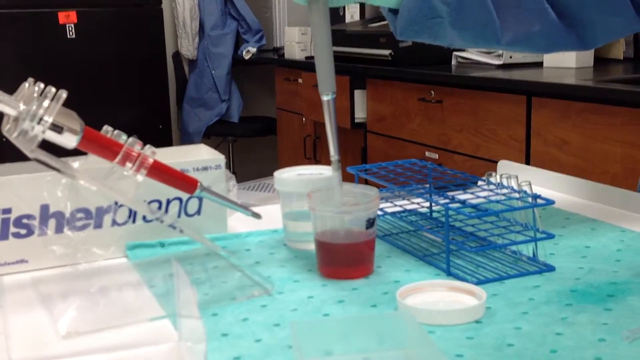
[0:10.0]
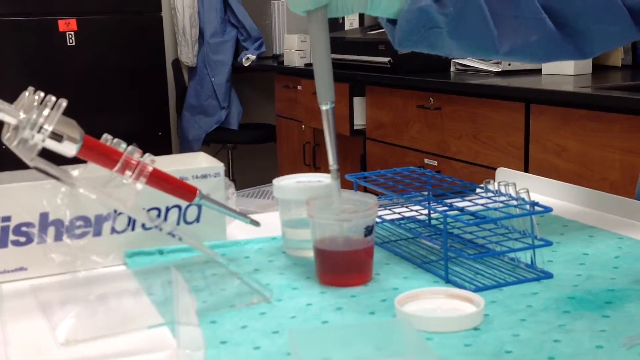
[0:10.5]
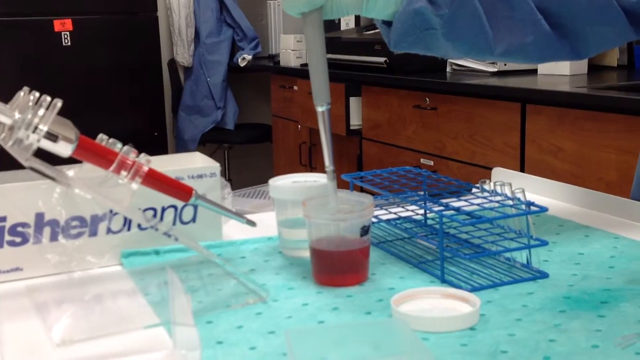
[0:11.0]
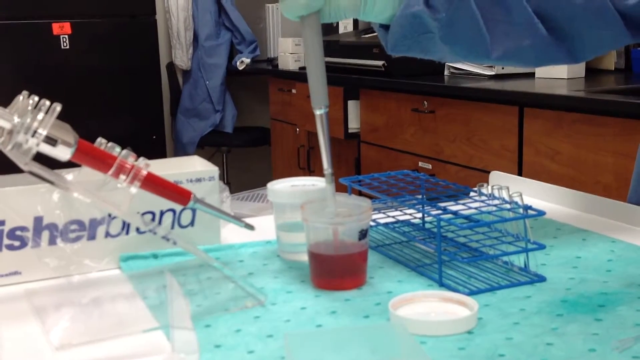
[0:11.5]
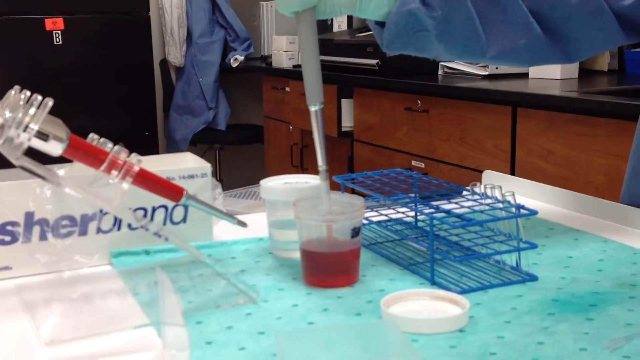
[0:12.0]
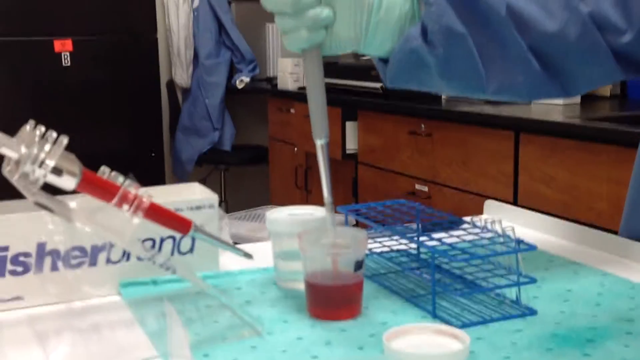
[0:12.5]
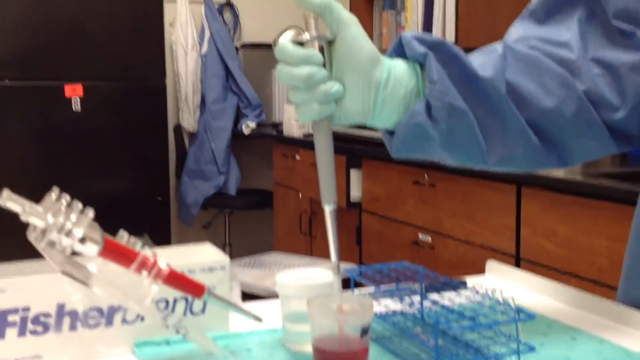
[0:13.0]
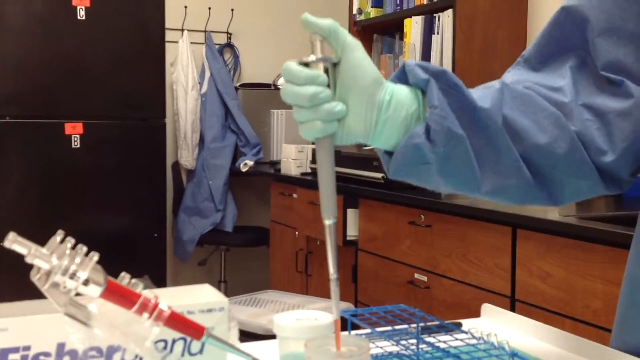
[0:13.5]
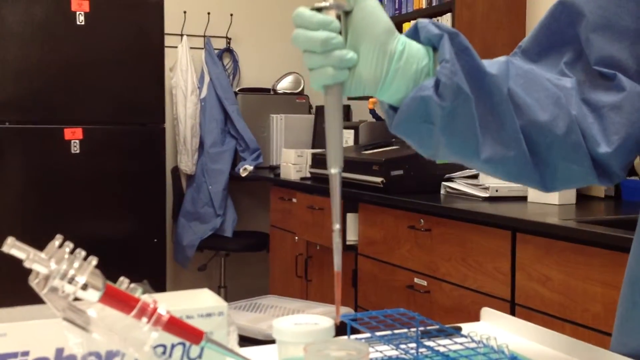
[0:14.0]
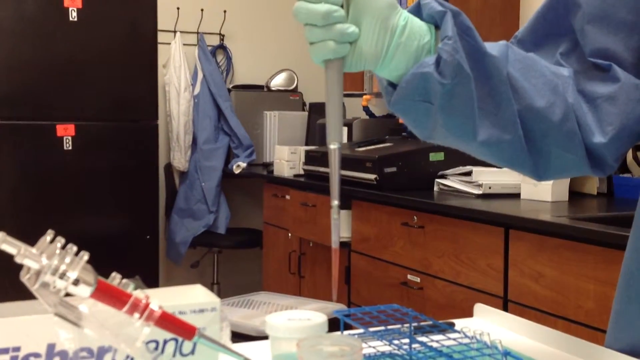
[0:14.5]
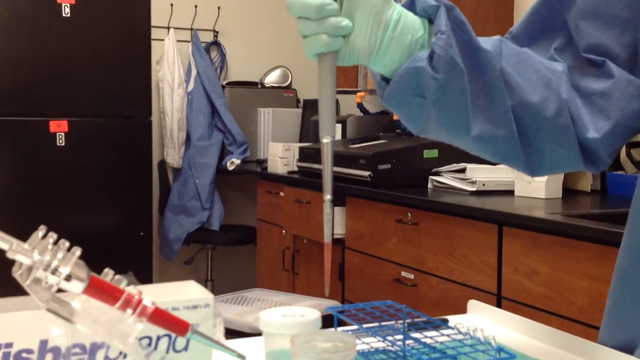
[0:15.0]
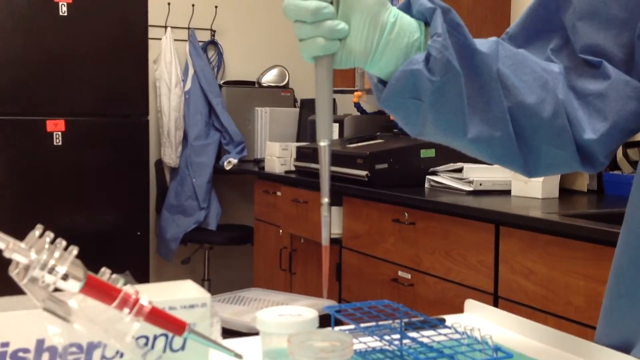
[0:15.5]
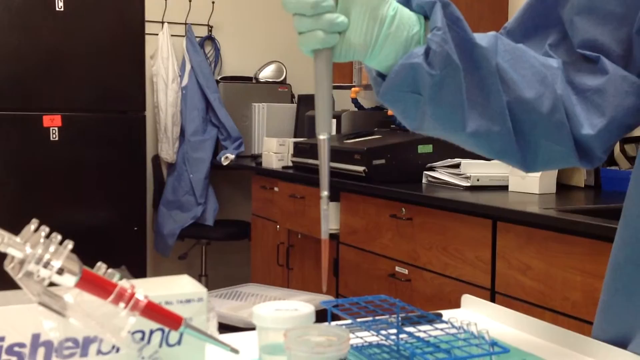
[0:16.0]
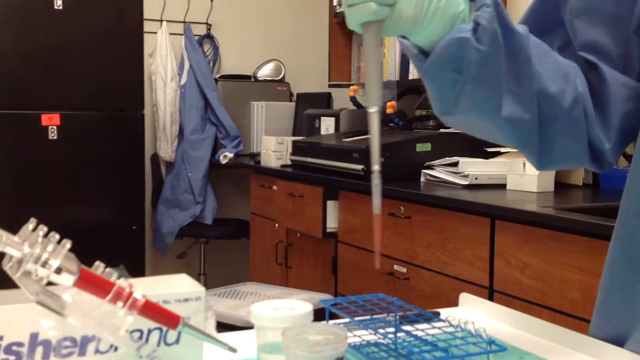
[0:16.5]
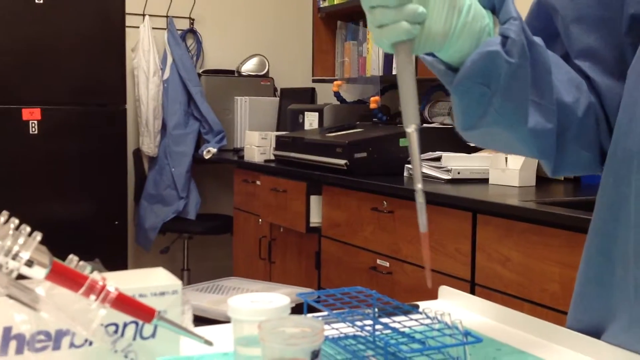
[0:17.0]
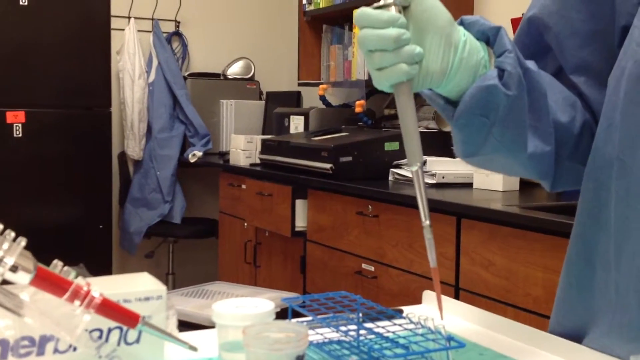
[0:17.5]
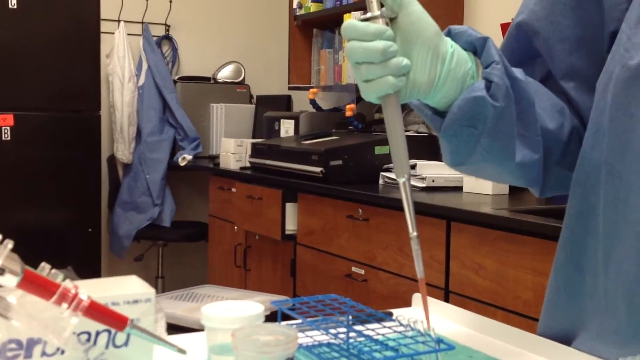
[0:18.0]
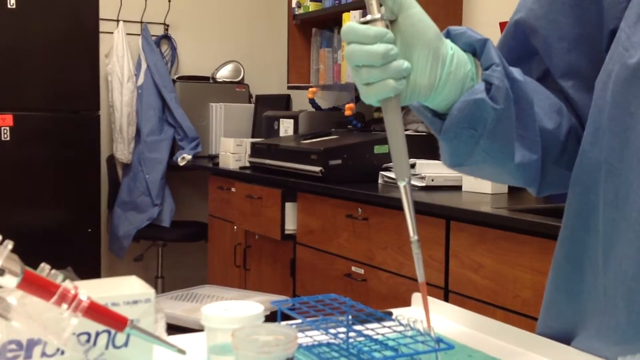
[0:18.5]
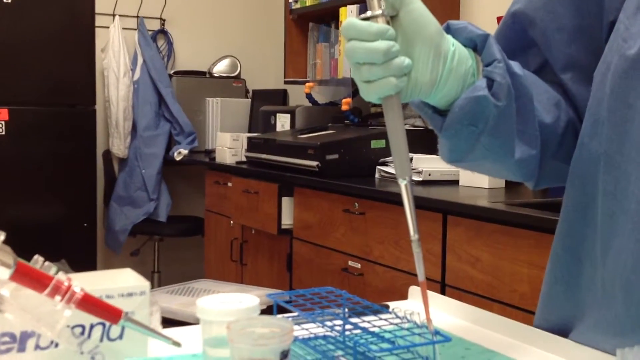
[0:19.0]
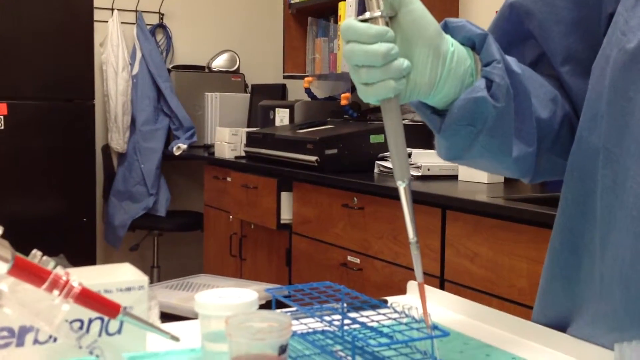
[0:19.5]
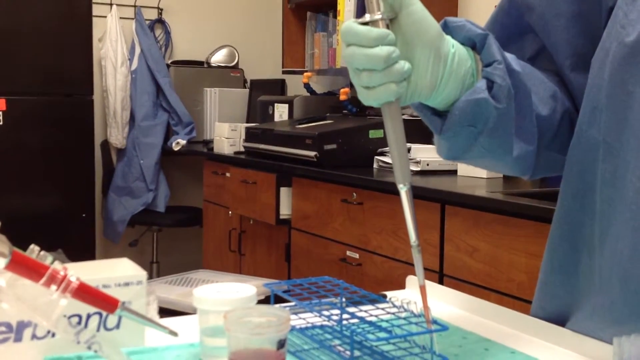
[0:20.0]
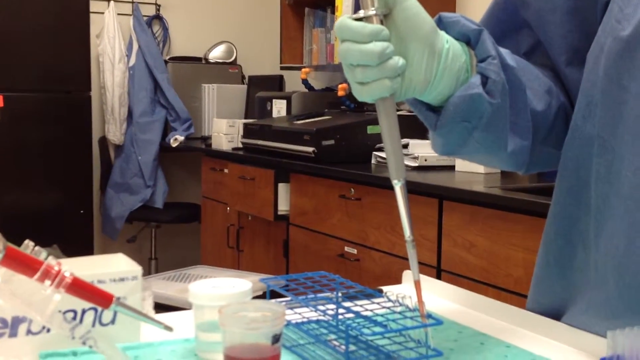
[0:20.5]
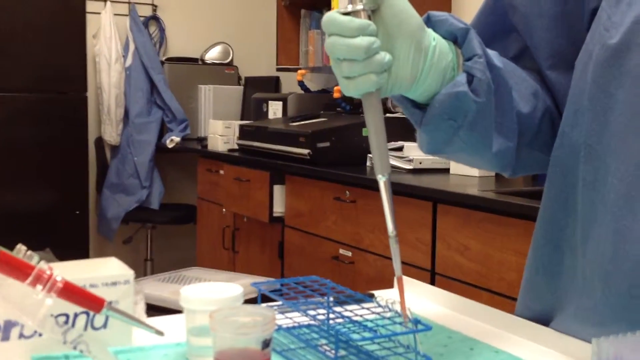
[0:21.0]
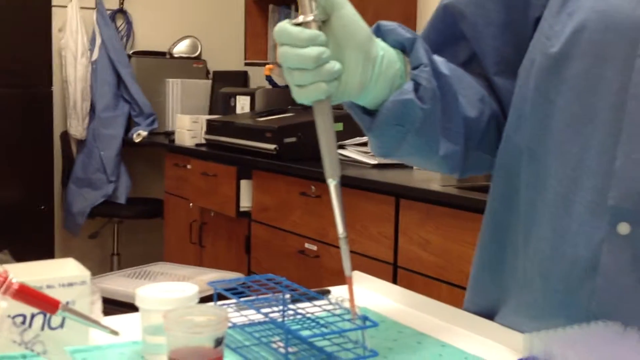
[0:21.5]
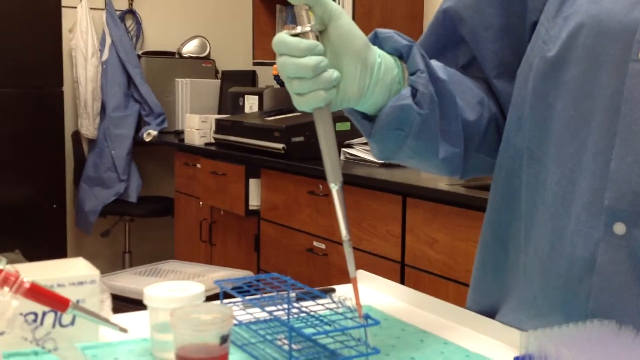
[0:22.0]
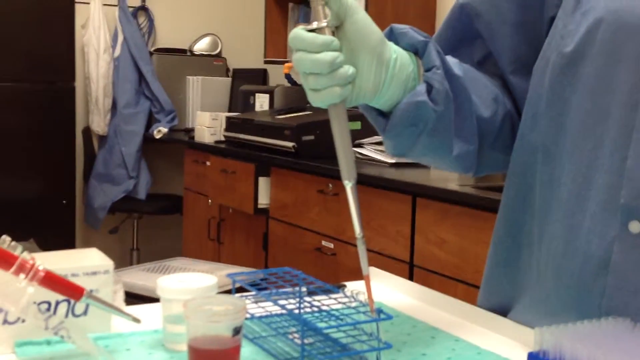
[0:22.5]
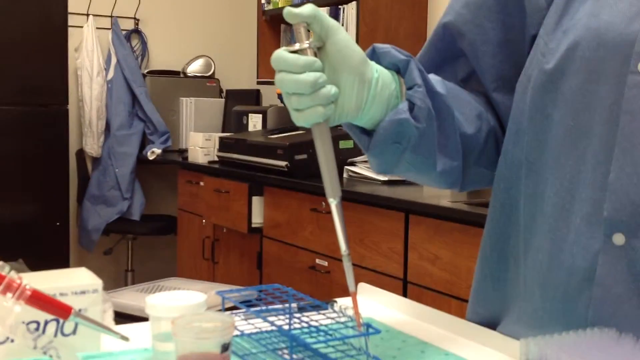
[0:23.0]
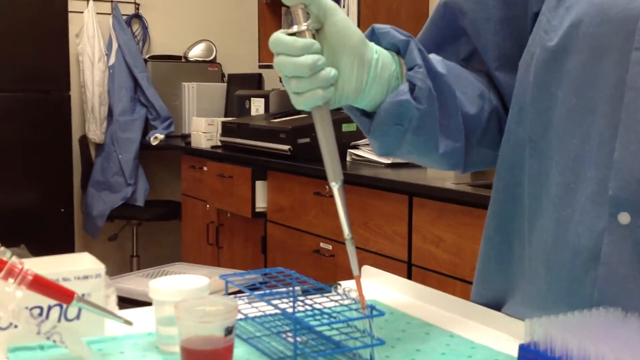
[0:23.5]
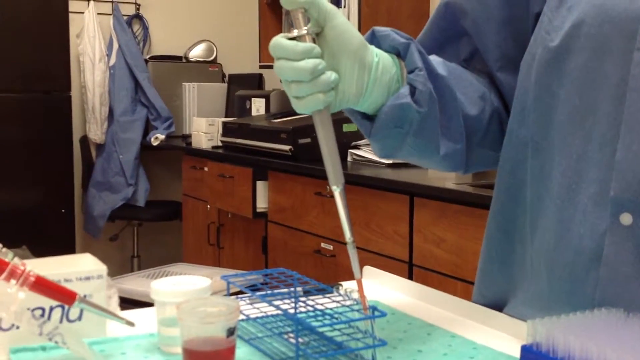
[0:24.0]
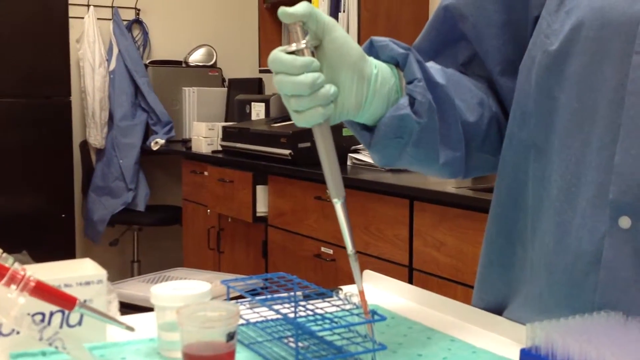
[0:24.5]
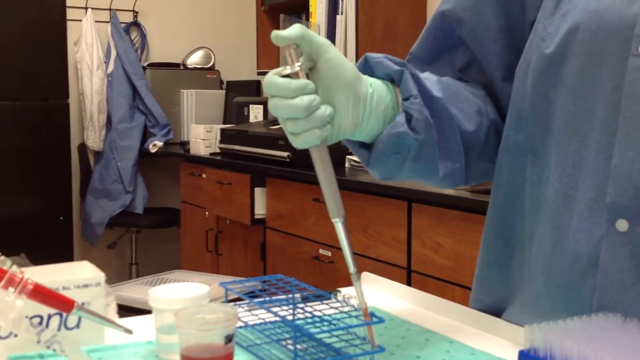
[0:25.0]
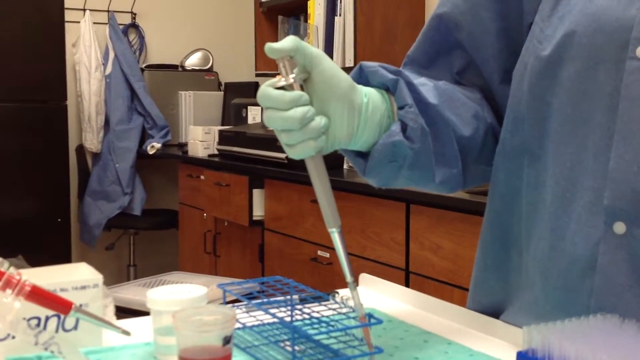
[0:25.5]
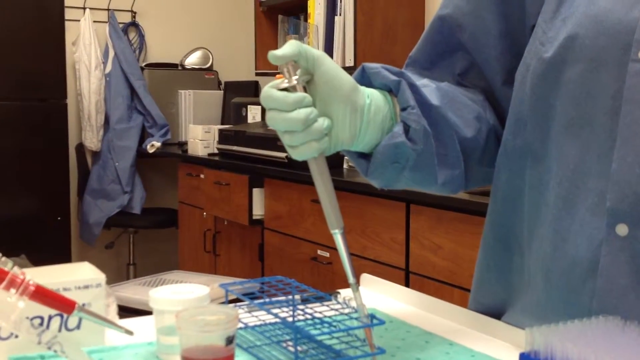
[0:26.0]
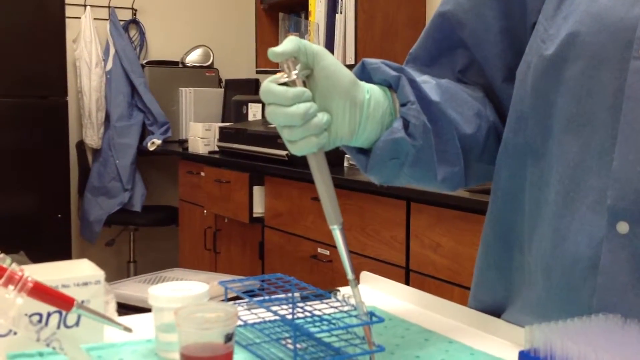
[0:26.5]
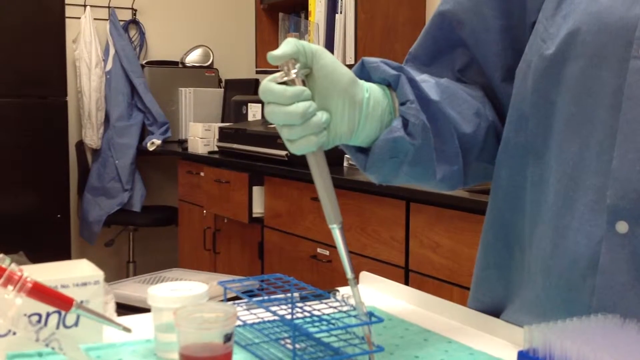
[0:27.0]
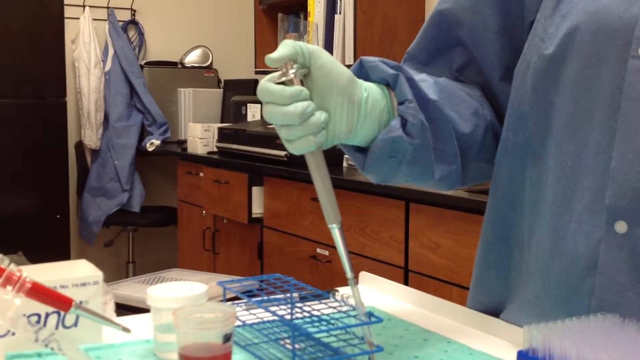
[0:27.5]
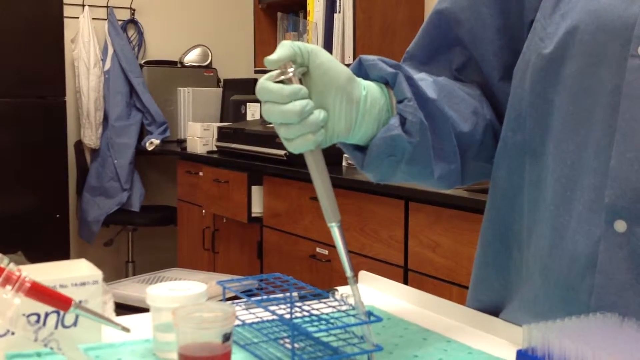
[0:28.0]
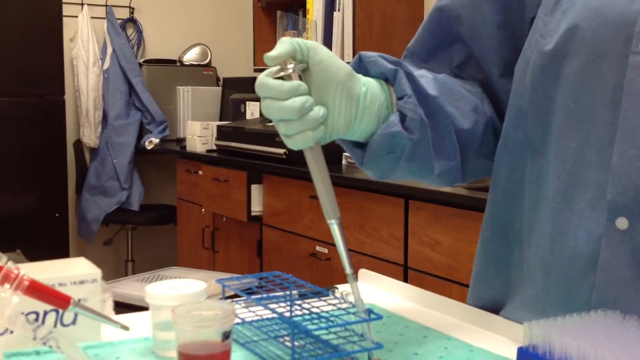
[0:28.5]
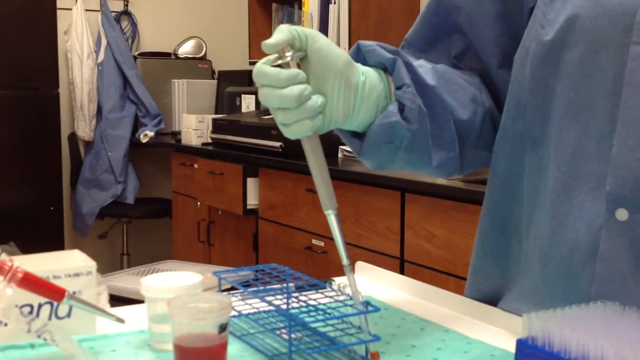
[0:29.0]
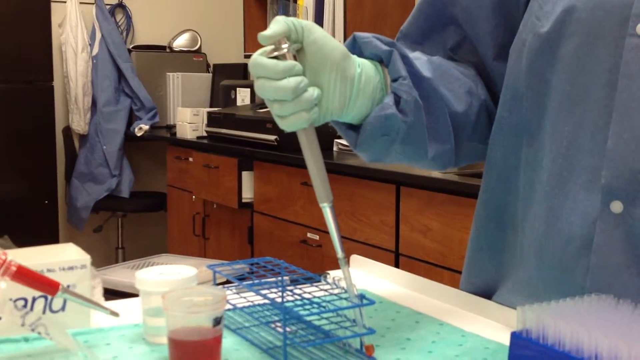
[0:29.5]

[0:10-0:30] A table is at the bottom of the screen. On the left, "Fisher Brand" appears on a box, and there is some sort of medical instrument made of clear plastic with a red interior and a needle-like end. In the center is another injector instrument, with just its bottom half visible. Below it, one cup has a lid on it and another cup has its lid off, the lid lying in front of it, and red liquid has been injected into this cup. On the right side of the screen are blue trays or shelving, and in the background there are cabinets and medical gowns hanging. The person injecting the red liquid wears a blue scrub gown and pale green latex gloves, and his arm, hand and the injector show in the top right corner of the screen. Then his hand moves to the center and he does further injections.